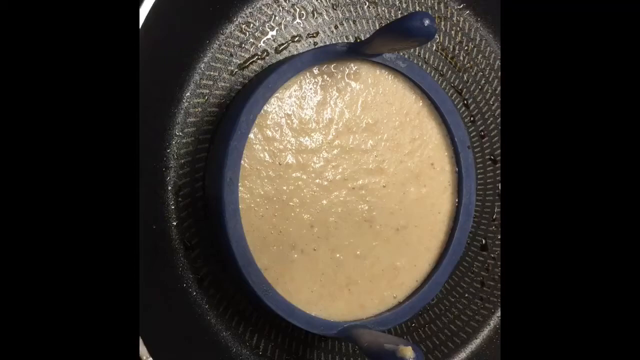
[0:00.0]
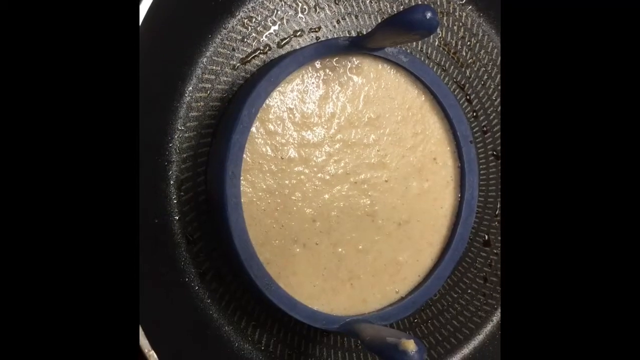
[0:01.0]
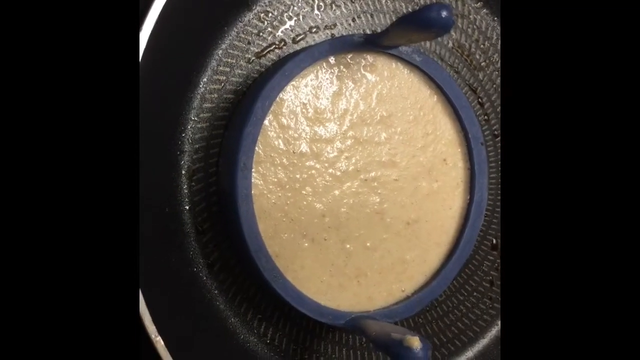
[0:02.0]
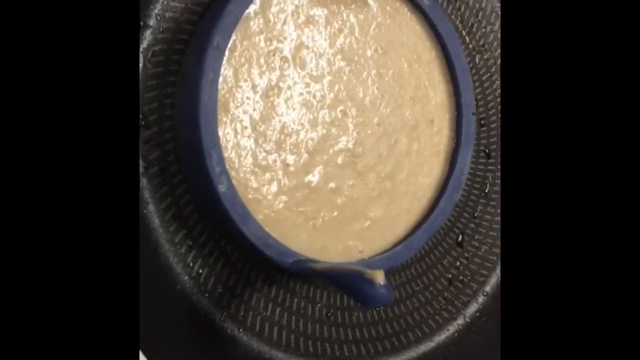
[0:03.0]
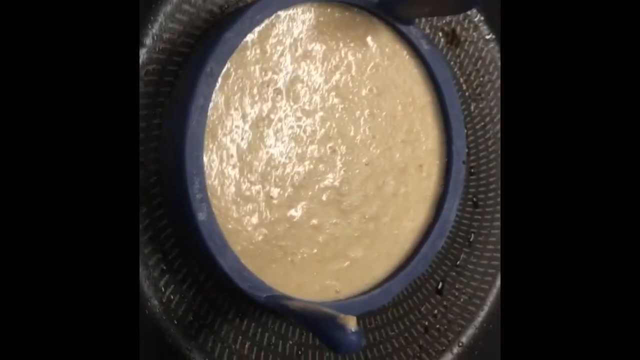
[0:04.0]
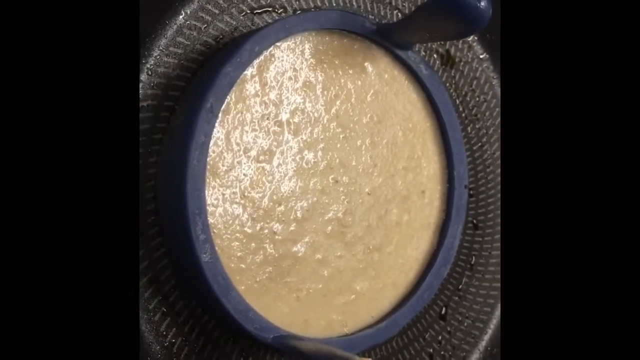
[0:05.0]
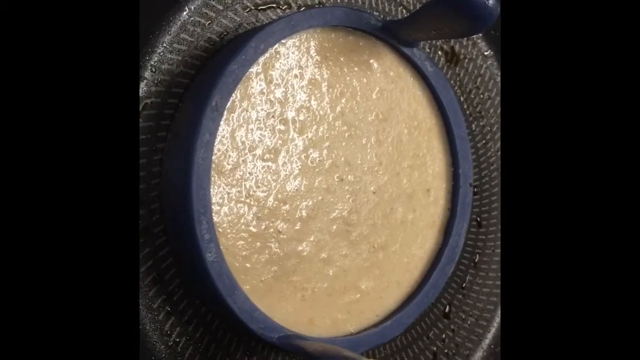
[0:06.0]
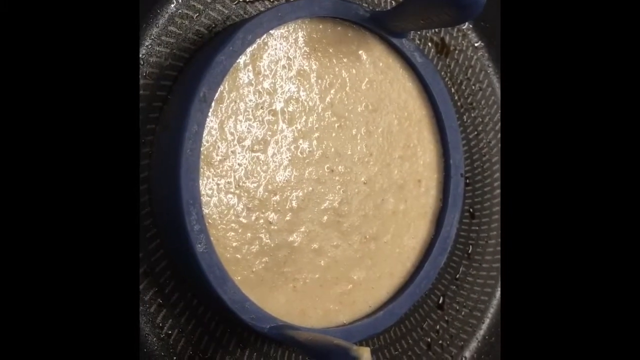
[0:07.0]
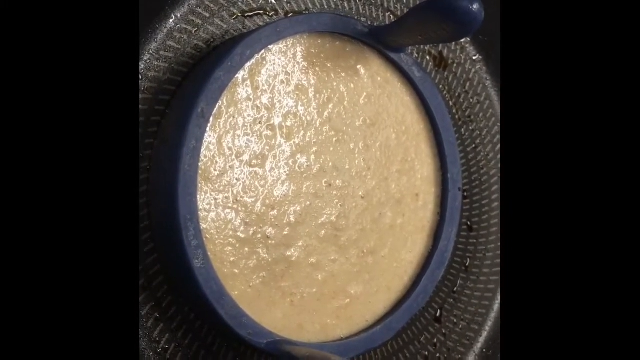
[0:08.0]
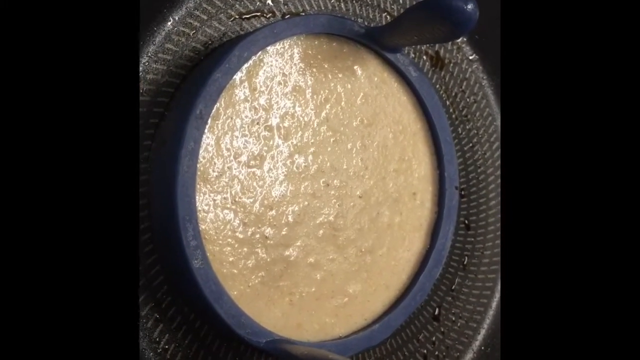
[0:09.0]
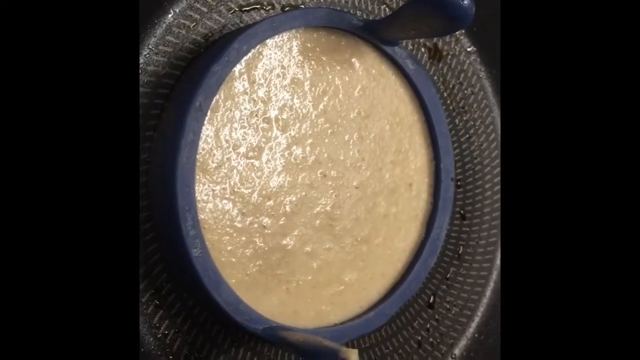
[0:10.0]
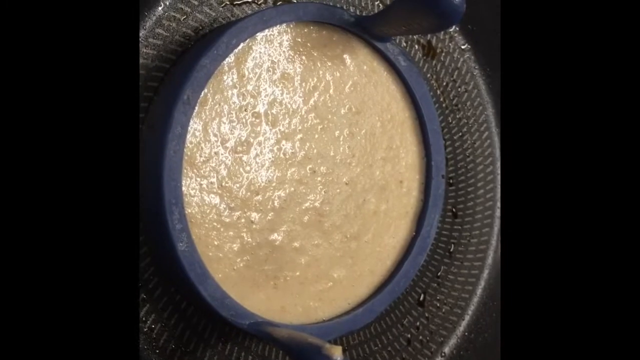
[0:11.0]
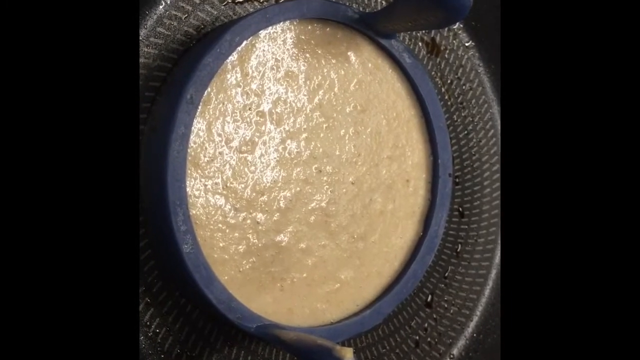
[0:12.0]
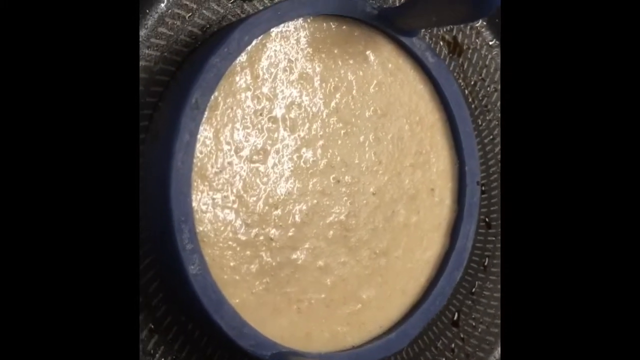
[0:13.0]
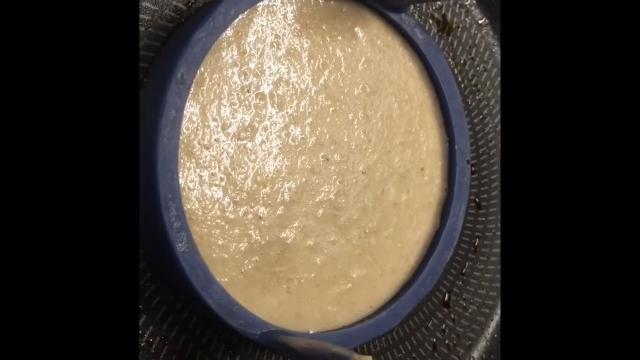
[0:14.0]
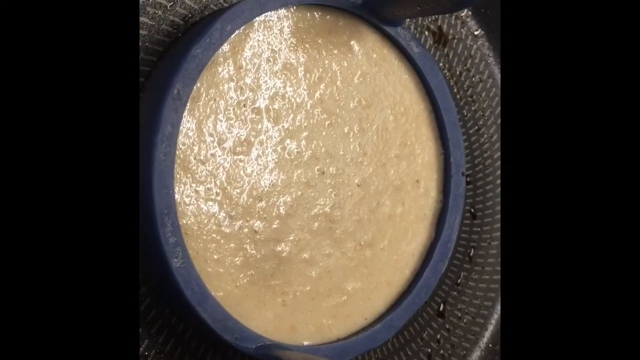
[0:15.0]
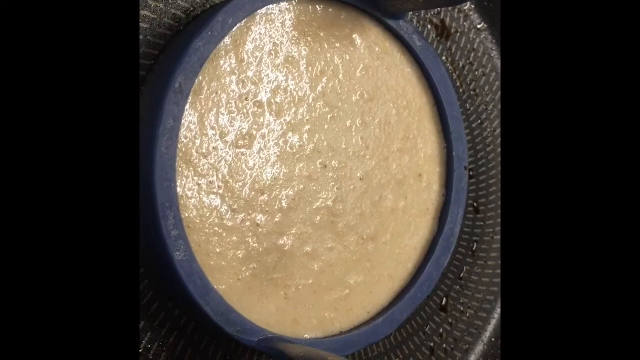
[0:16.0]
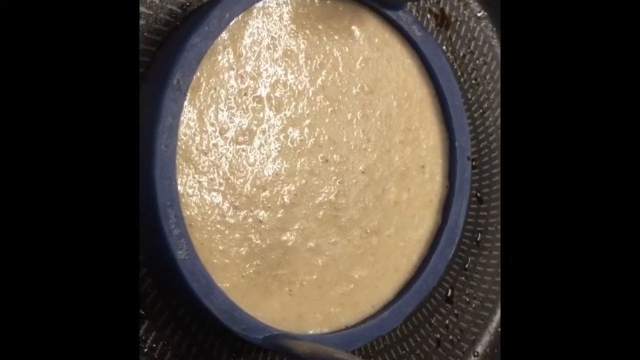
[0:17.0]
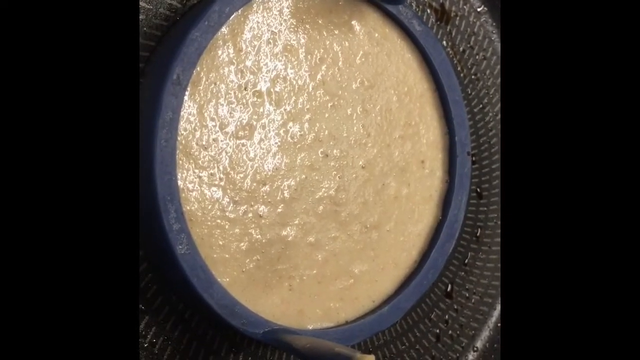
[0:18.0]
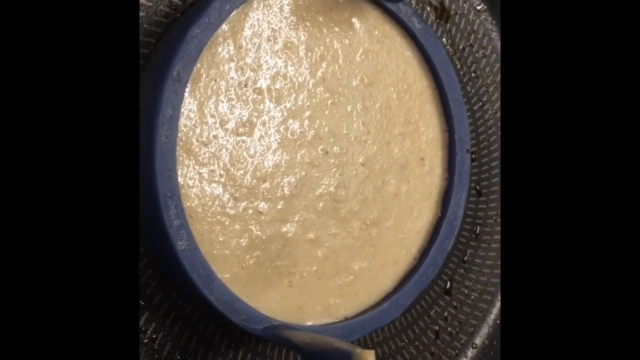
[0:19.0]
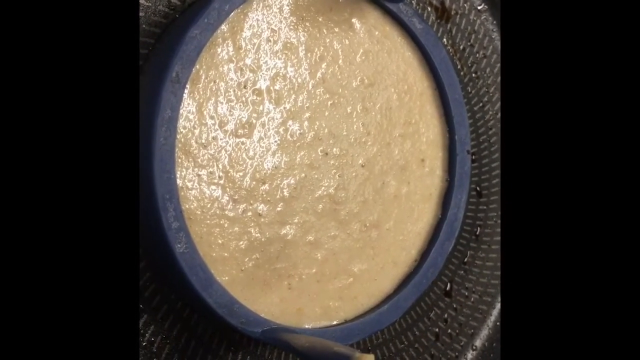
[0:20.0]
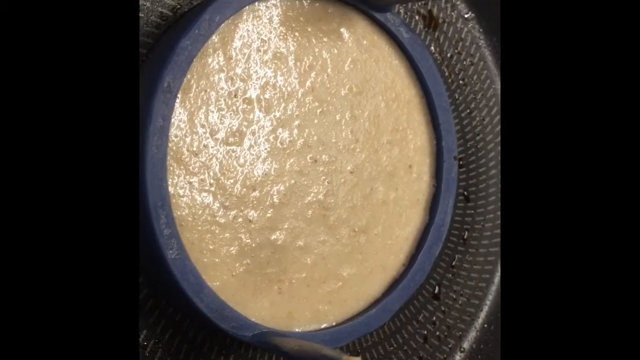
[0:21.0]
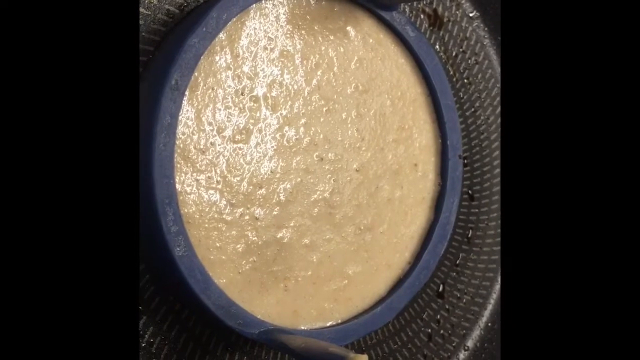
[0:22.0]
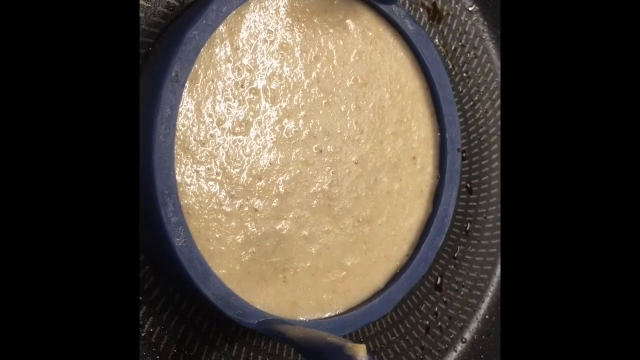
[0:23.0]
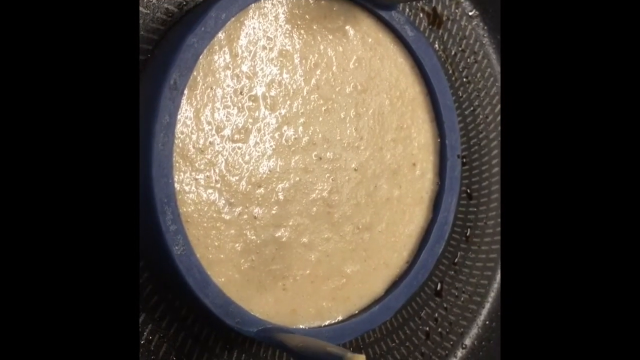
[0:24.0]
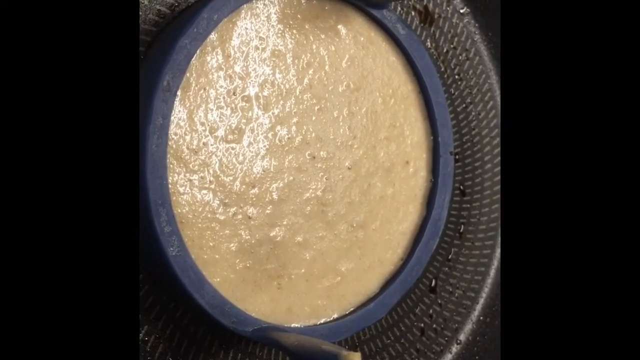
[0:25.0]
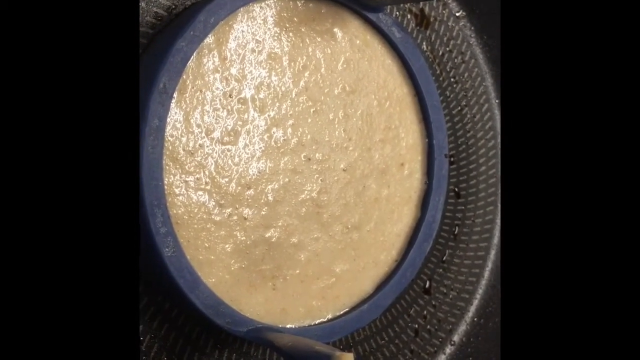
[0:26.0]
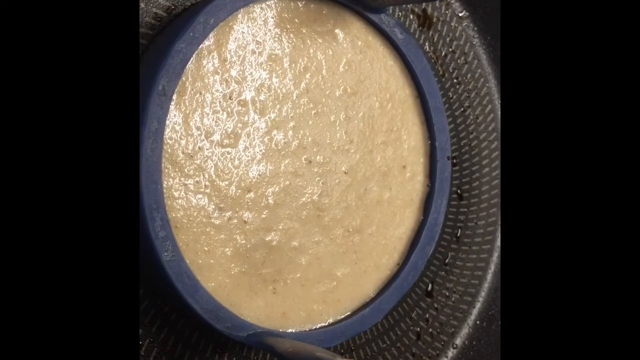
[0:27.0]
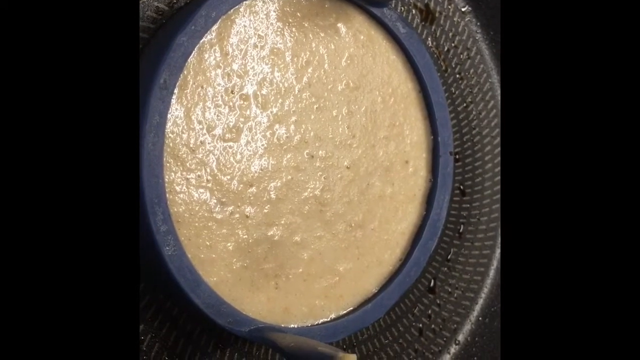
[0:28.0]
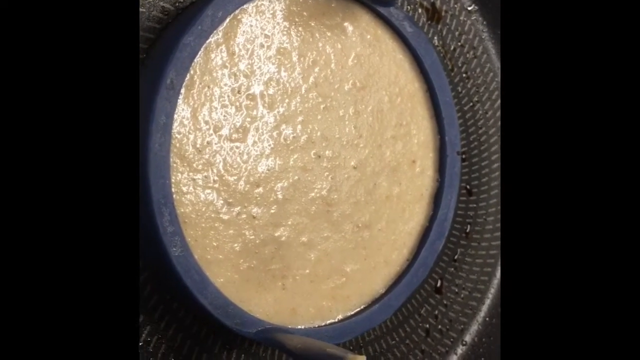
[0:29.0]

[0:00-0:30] A close-up shows a large black round pan with light white small dashed lines on the bottom. In the middle of the pan is a dark blue circular object that looks like it is made of metal or ceramic, with two knob handles on the left and right sides. Inside the circle is tan-colored liquid pancake batter with some small brown specks in it; the round object seems to keep the pancake in a circular shape as it cooks. The person appears to be standing over the pan, filming as they look down on the batter. The camera zooms in a little closer, showing some small bubbles popping on the pancake surface, although most of the surface is still, probably because it is cooking over a low heat.